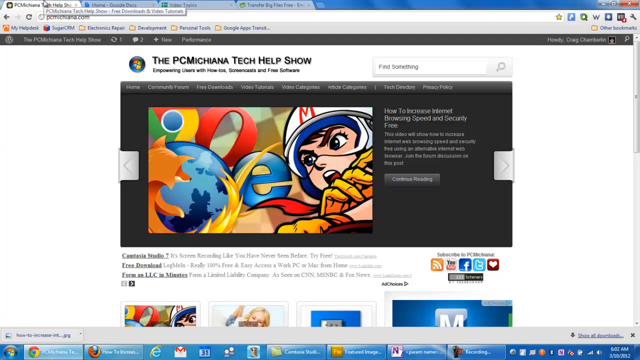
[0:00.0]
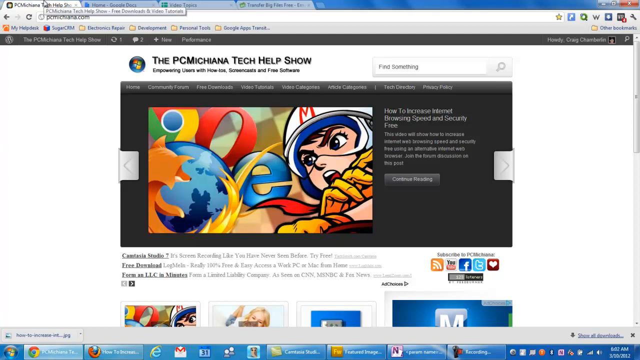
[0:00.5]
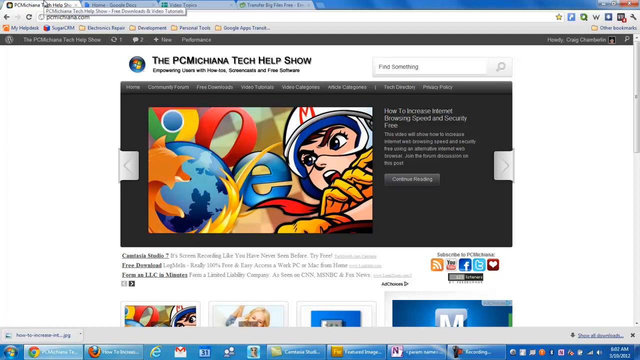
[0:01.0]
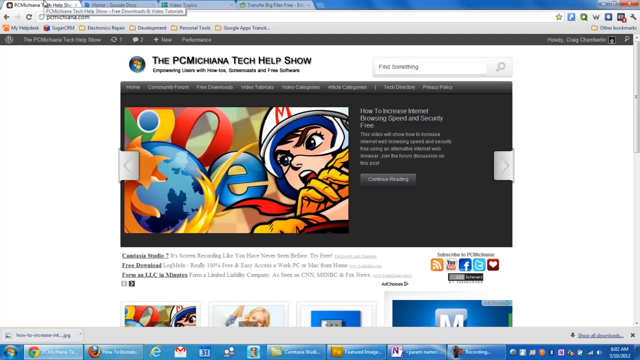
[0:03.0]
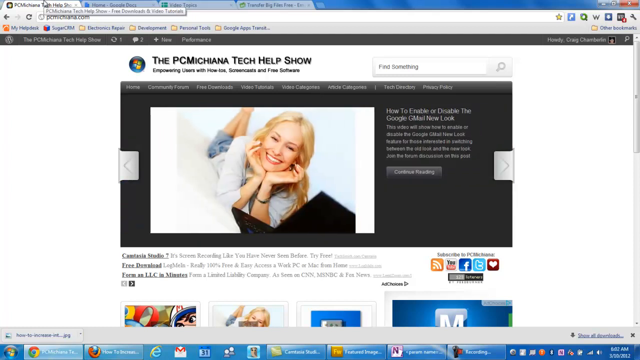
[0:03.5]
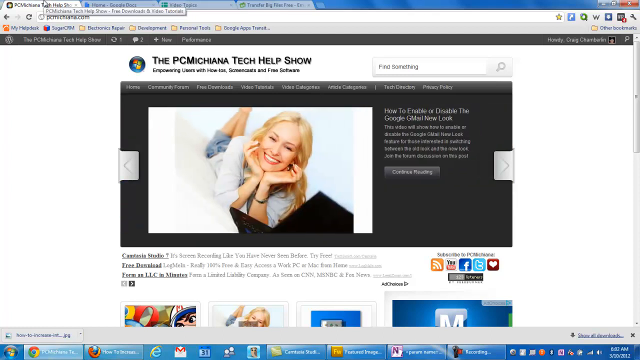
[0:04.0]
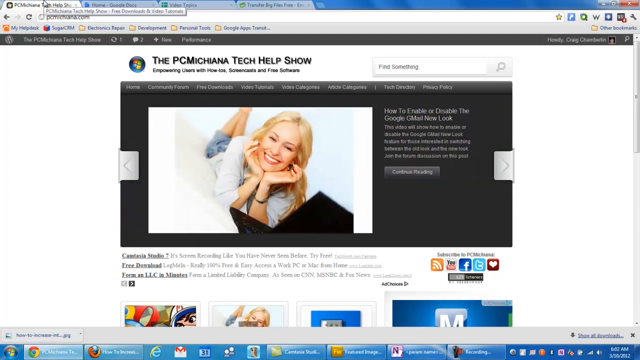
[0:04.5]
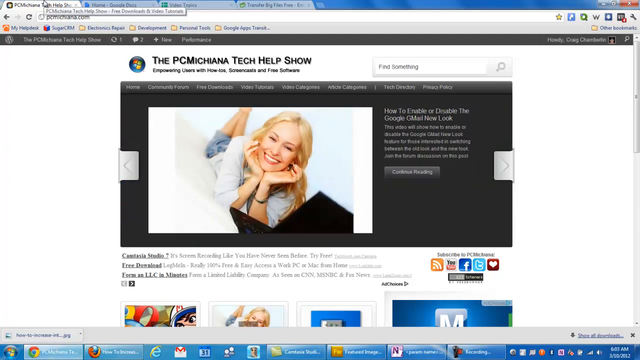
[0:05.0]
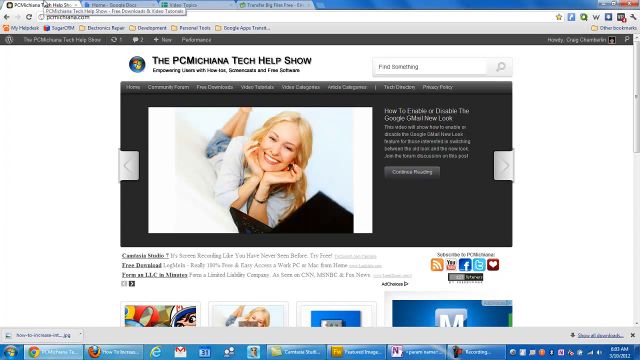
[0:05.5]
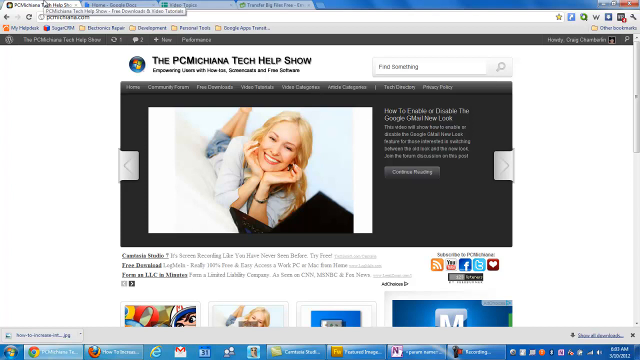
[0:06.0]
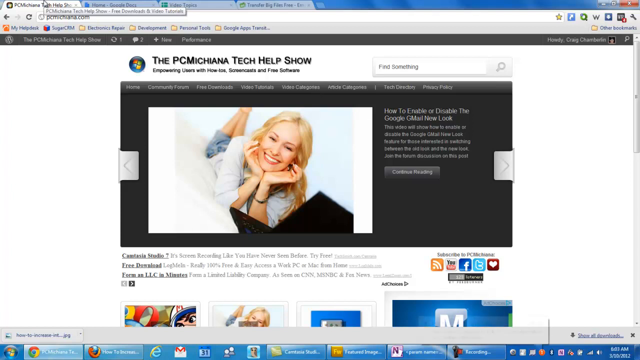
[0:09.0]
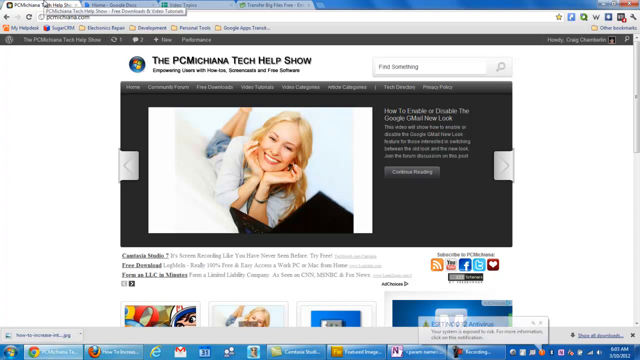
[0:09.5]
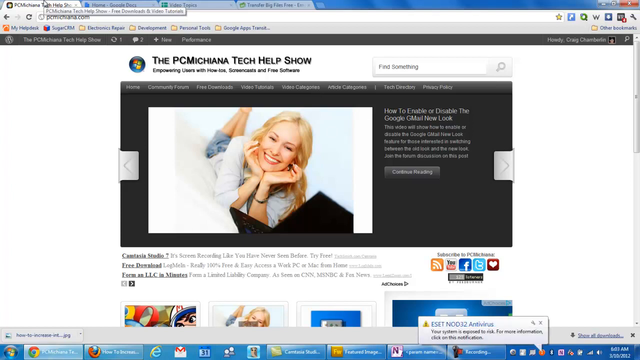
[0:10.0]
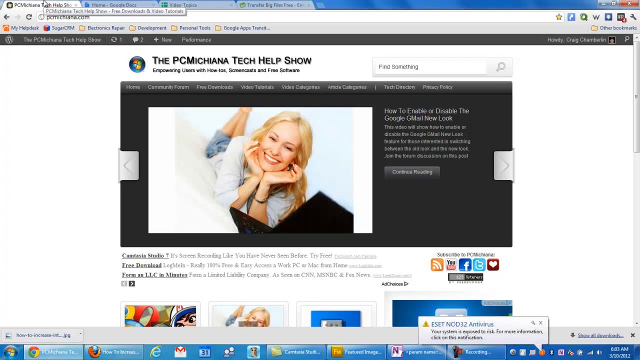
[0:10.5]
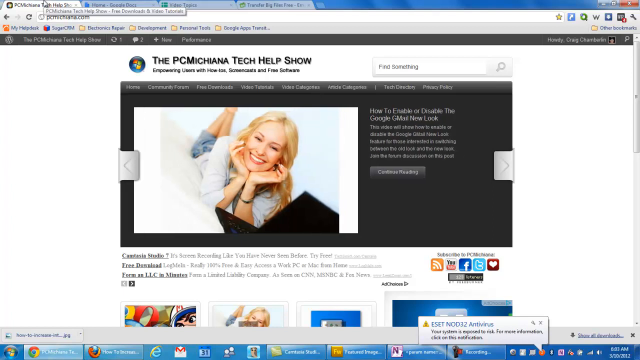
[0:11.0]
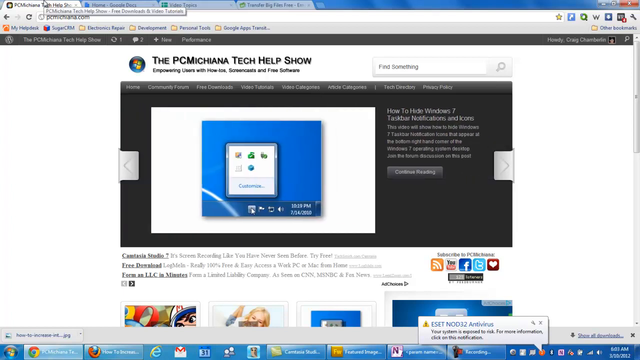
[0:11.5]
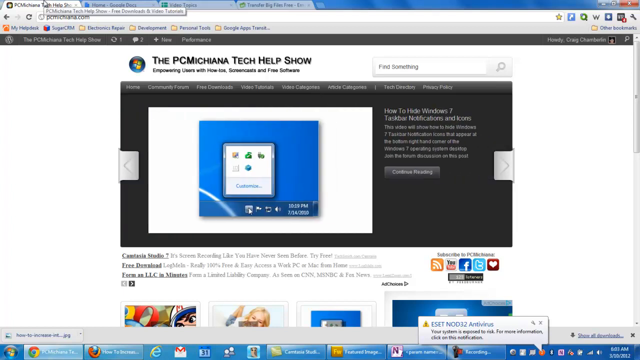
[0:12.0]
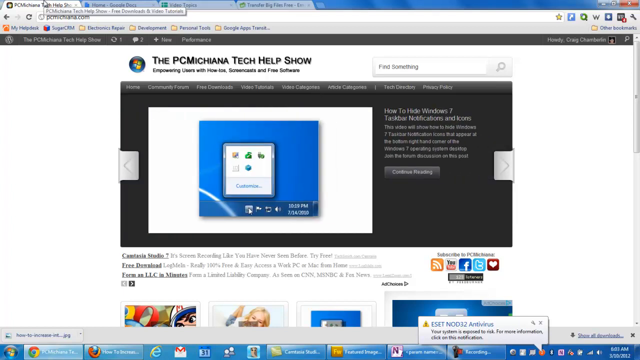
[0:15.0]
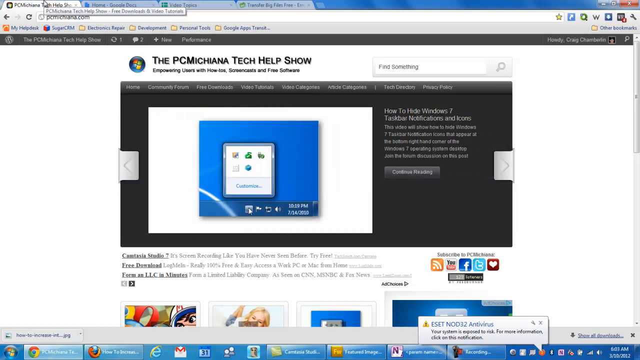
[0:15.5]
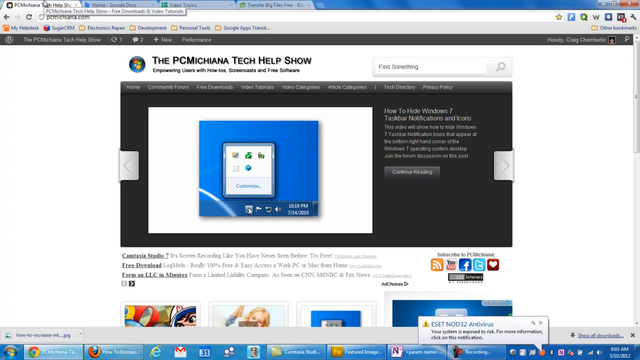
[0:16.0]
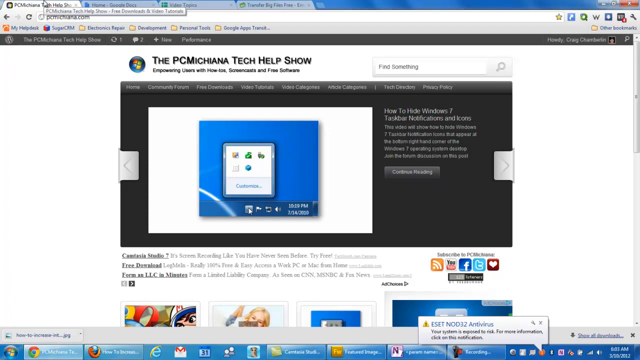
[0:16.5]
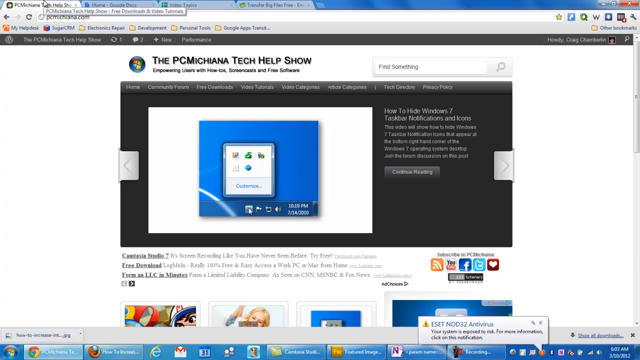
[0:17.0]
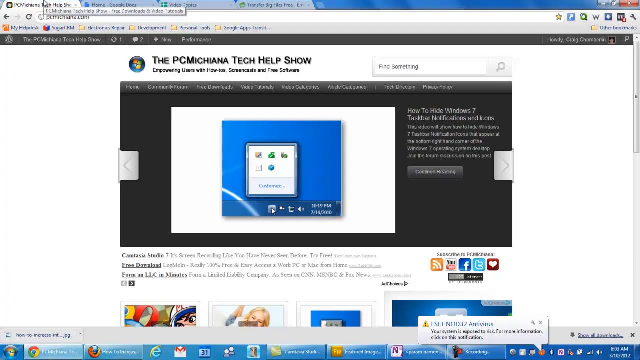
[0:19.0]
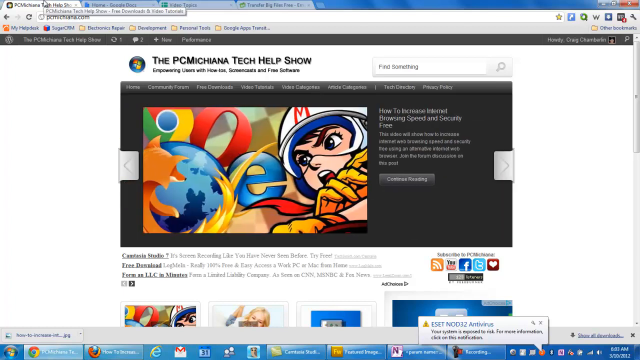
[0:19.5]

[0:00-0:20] A webpage initially shows a cartoon figure of a woman in a helmet. There is a red M on her helmet and she wears yellow gloves. Her mouth is open and she has quite prominent eyelashes. On the left-hand side of the screen is a fox with flames engulfing a world, and web search logos are around that. The image then slides across to the left, revealing an attractive blonde woman lying on her stomach with her hands under her chin, cupping her face. She wears a white shirt and what looks like blue denim jeans. This photograph is in a black box. The view slides across again to an image of a blue square containing a smaller screen with icons inside another square. A curved white line sweeps toward the bottom left of the blue box. This is within a black box that has text around it.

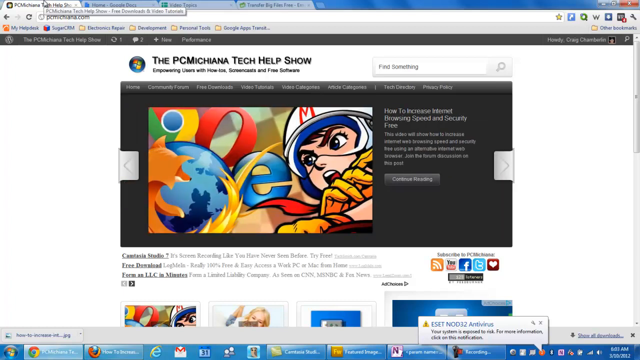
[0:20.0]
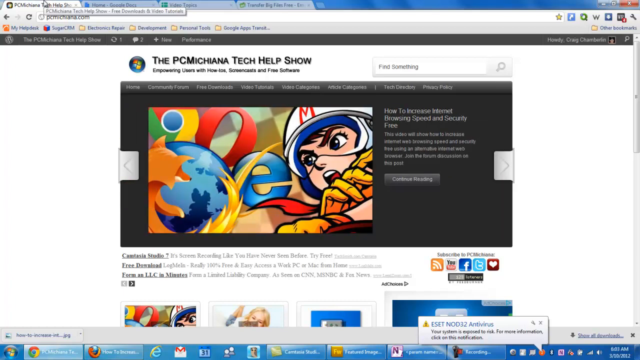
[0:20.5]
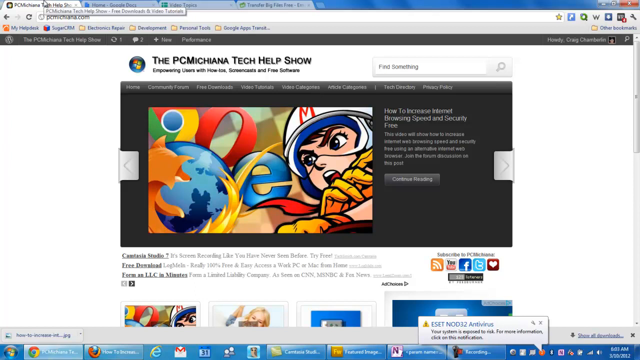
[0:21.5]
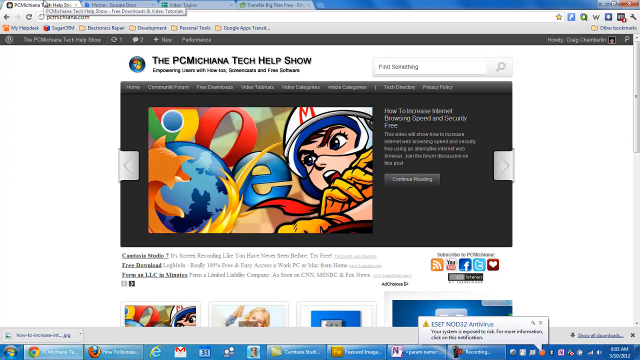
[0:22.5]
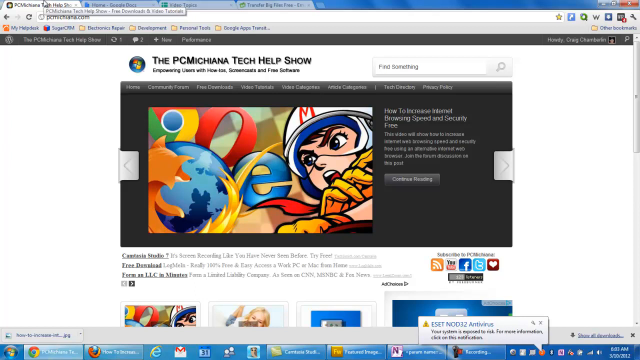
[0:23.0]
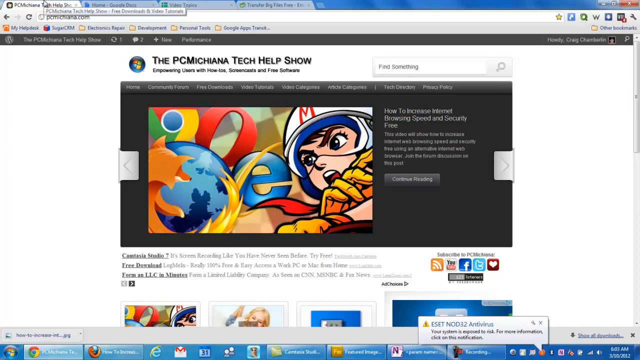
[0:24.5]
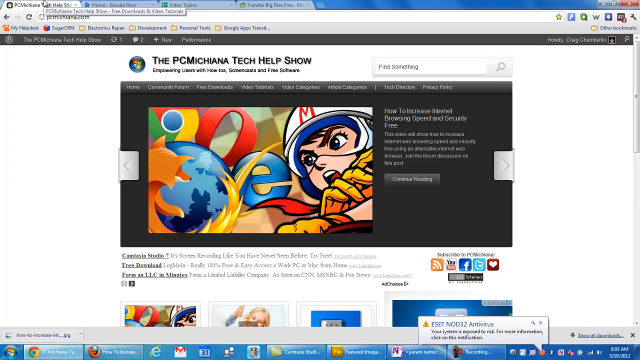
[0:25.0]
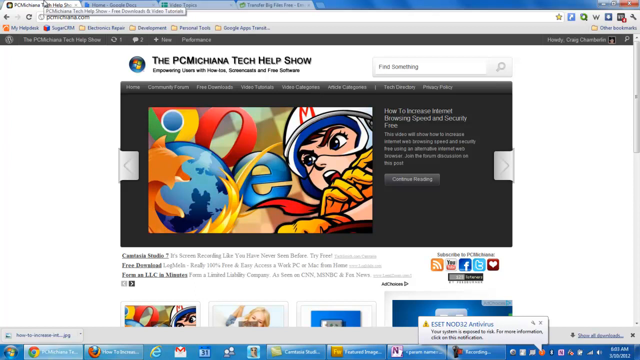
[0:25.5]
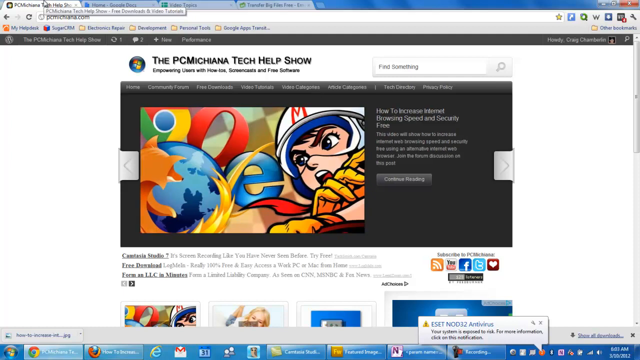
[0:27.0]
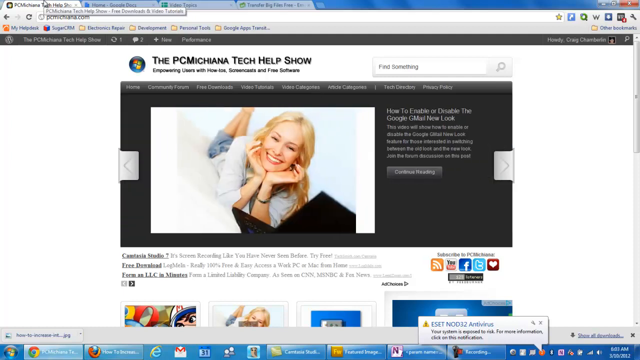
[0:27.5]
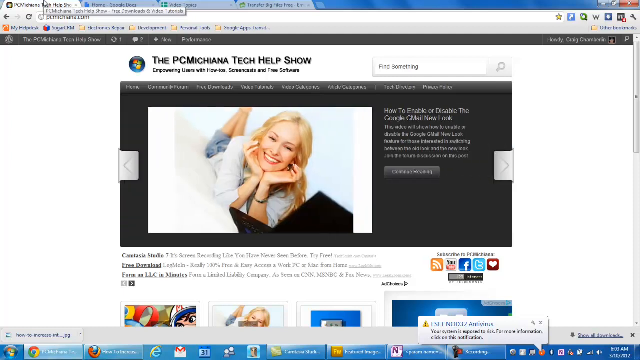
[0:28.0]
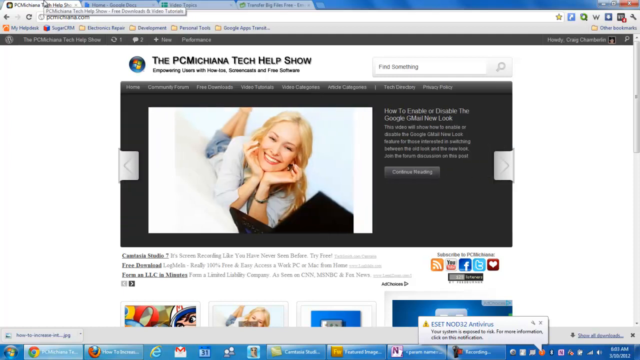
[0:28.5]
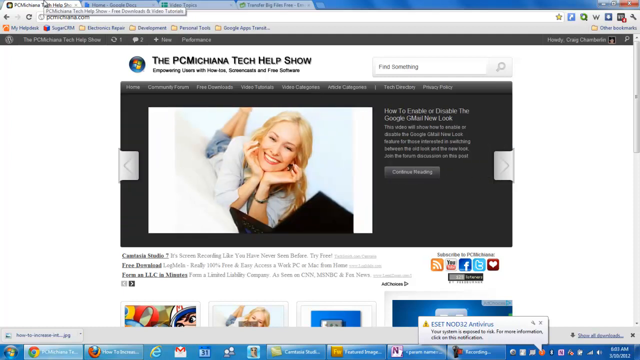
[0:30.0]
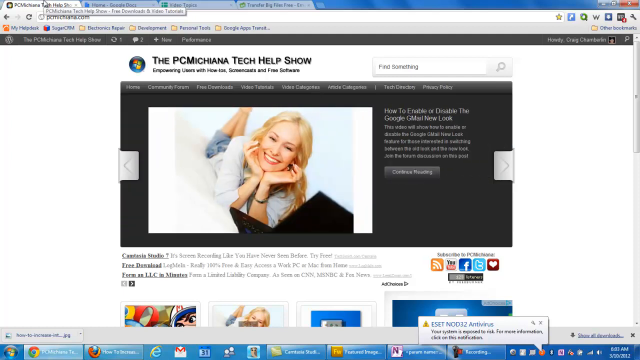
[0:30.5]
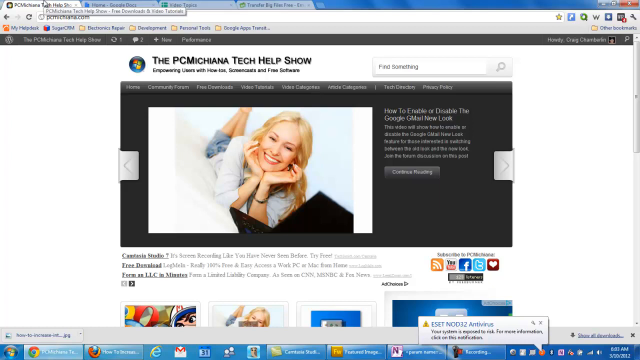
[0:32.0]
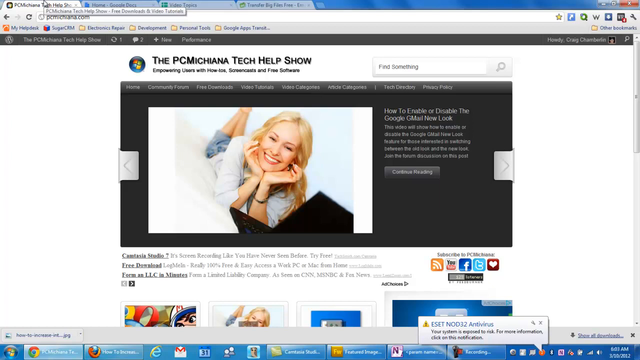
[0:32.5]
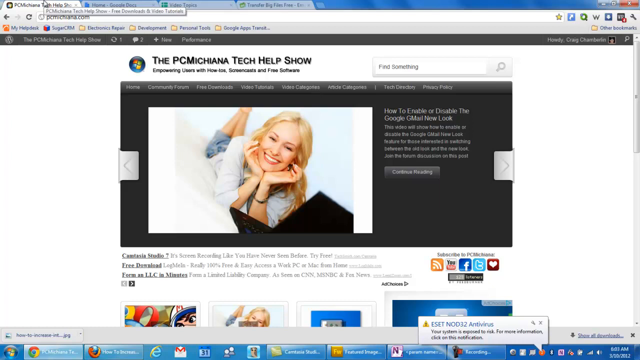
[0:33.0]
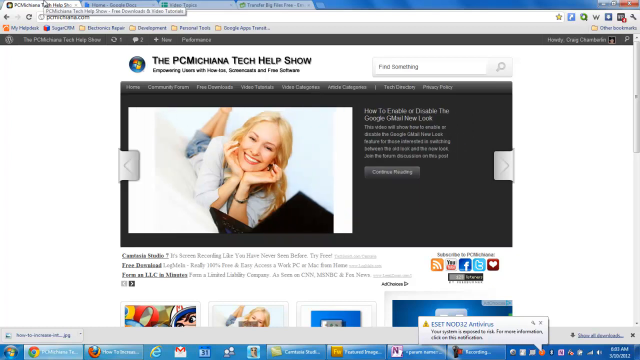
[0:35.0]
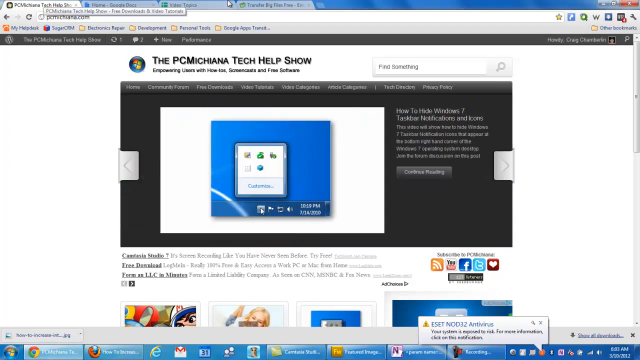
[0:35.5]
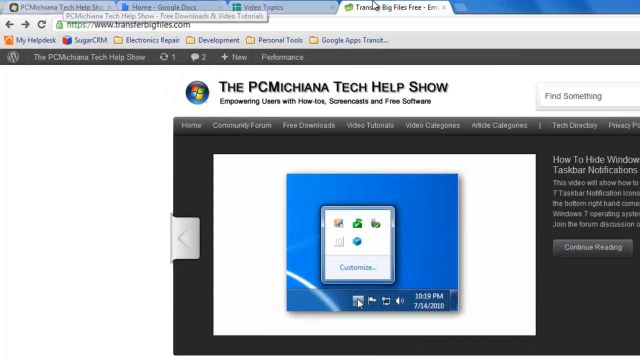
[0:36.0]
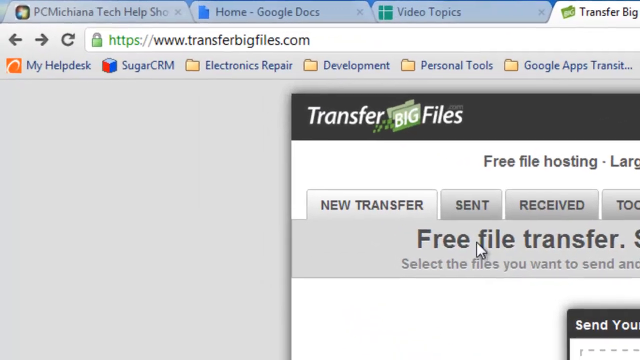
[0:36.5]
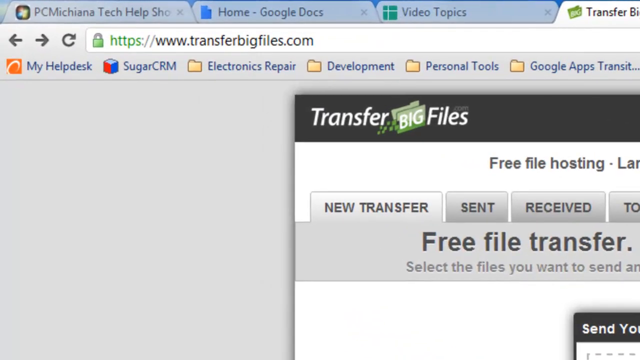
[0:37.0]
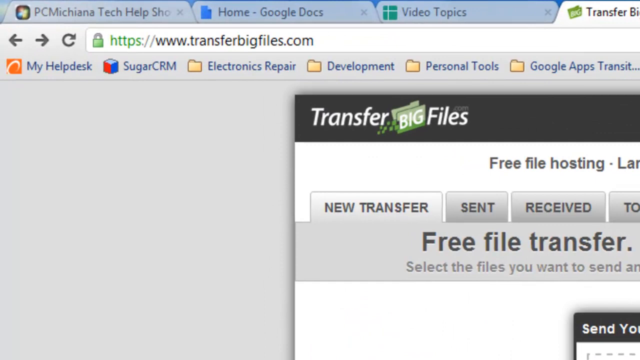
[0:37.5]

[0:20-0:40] The cartoon superhero woman appears; she has a white helmet with a red M on top. The image sweeps over to the right, showing the attractive woman cupping her face with her fingers pointing toward it as she smiles. It then cuts to the blue square with the smaller white square containing icons and the curved white line across the bottom left-hand corner. The images sweep across quickly, with grey squares on either side of them bearing arrows. After the small blue square, the view zooms in to the top left-hand side of the screen, on white text reading "Transfer big Files", with "Transfer" and "Files" beginning with capital letters and "big" in white text inside a sloped green rectangle.